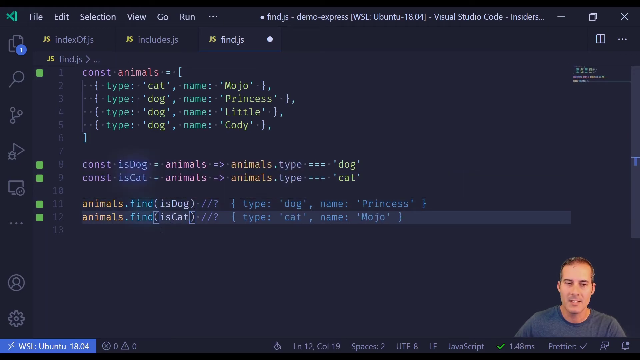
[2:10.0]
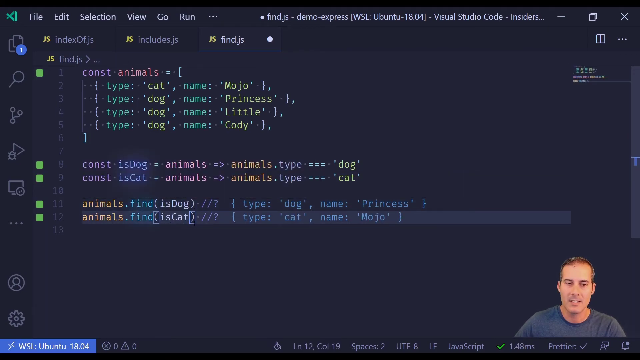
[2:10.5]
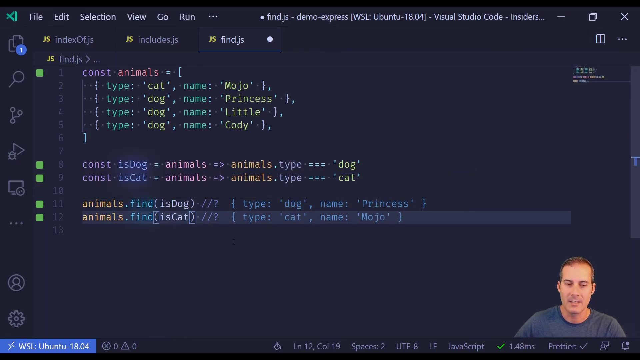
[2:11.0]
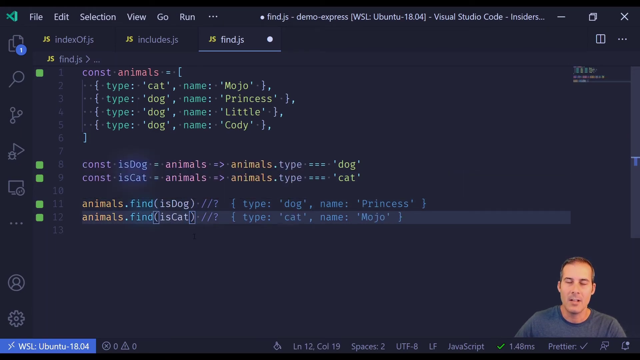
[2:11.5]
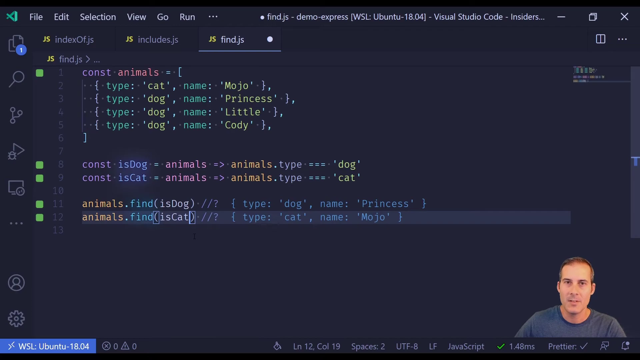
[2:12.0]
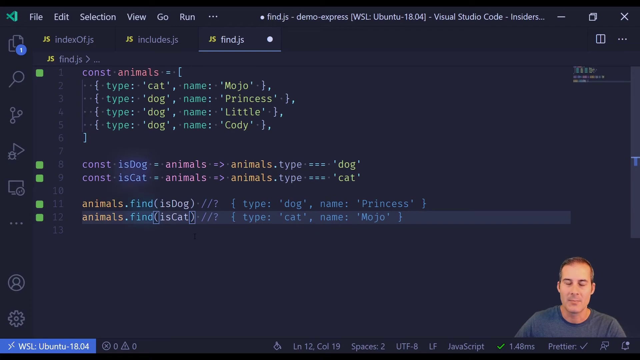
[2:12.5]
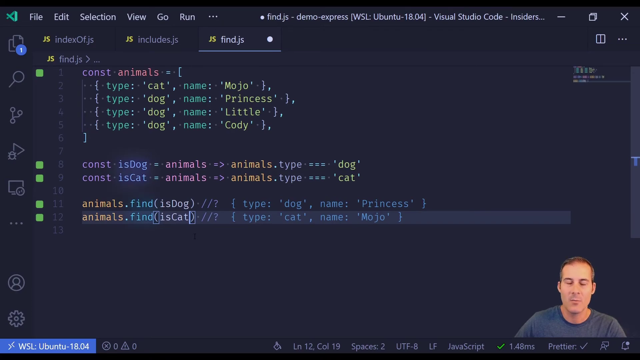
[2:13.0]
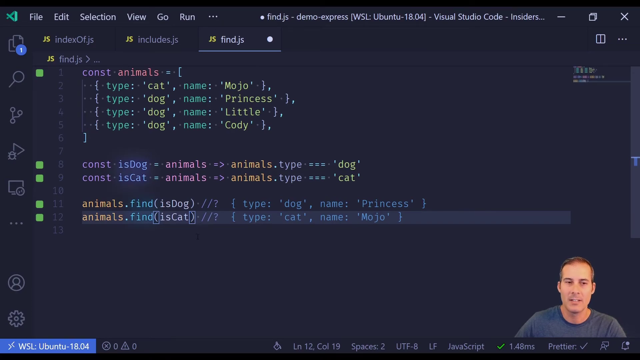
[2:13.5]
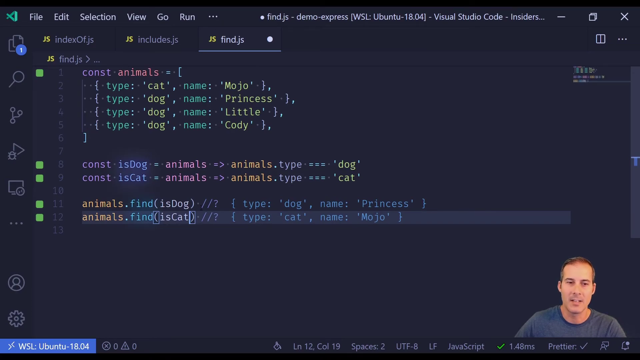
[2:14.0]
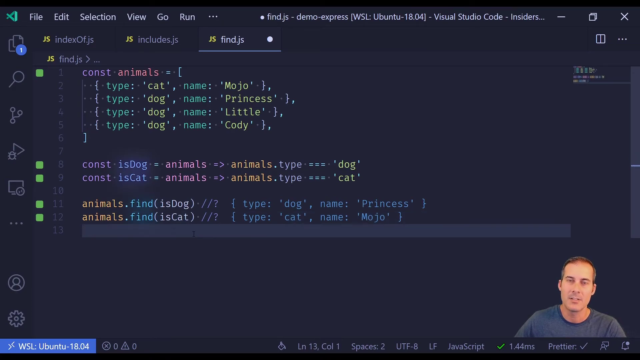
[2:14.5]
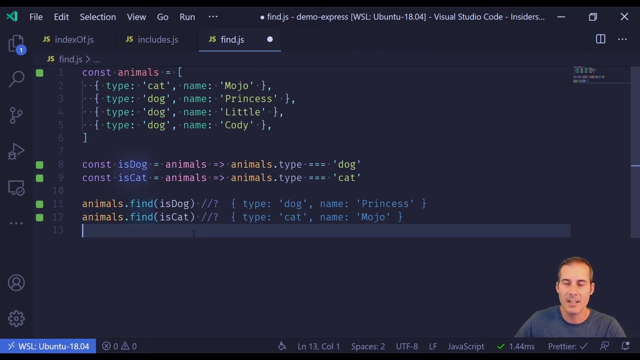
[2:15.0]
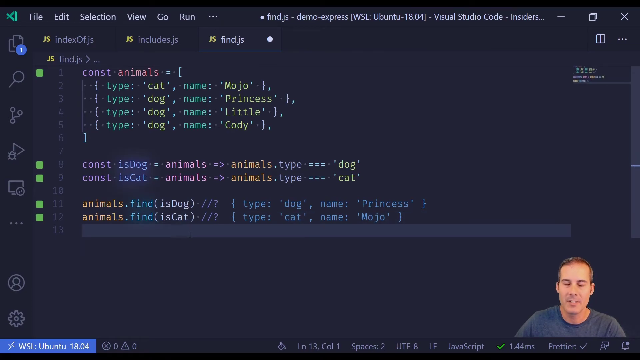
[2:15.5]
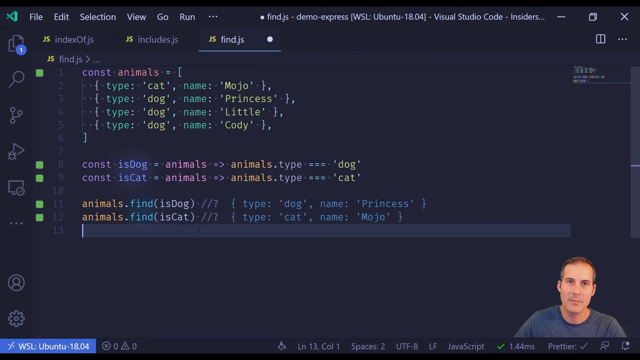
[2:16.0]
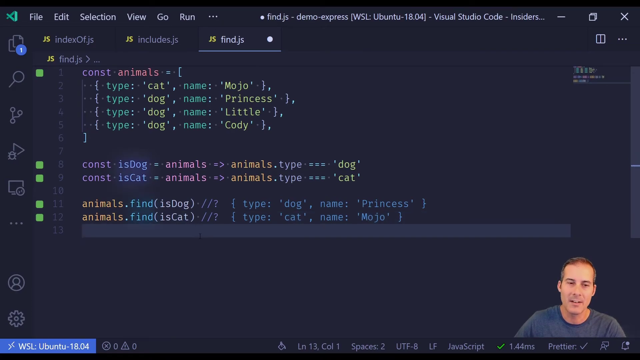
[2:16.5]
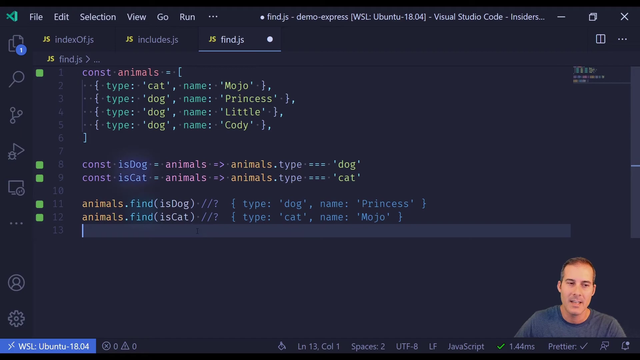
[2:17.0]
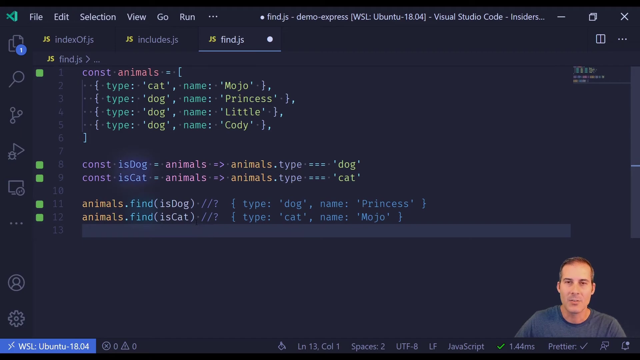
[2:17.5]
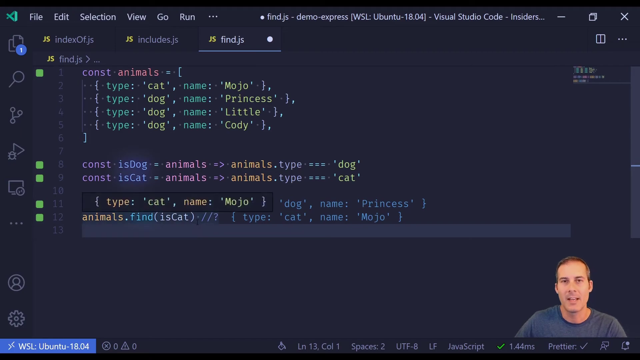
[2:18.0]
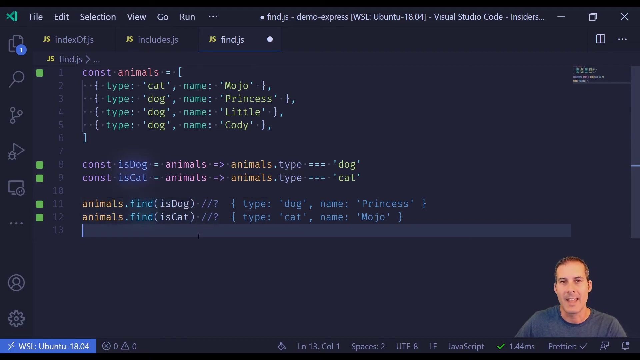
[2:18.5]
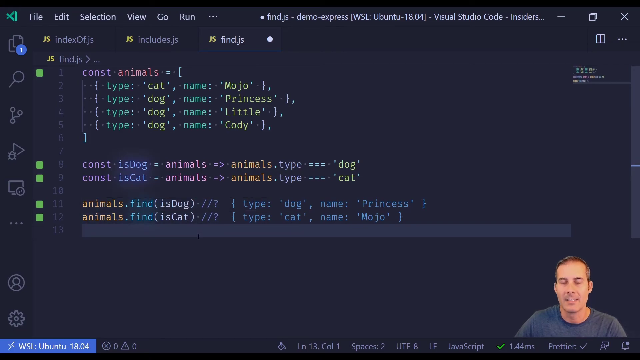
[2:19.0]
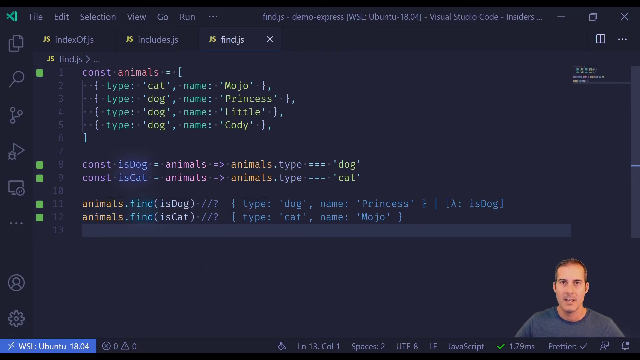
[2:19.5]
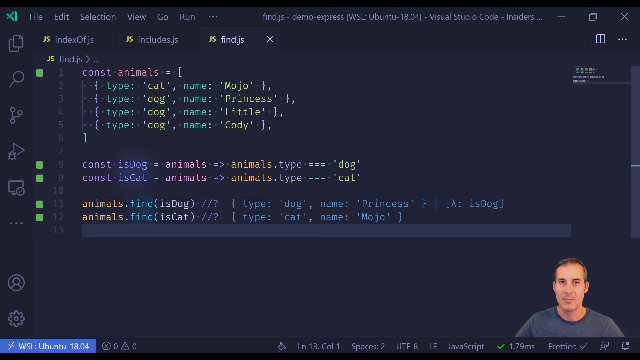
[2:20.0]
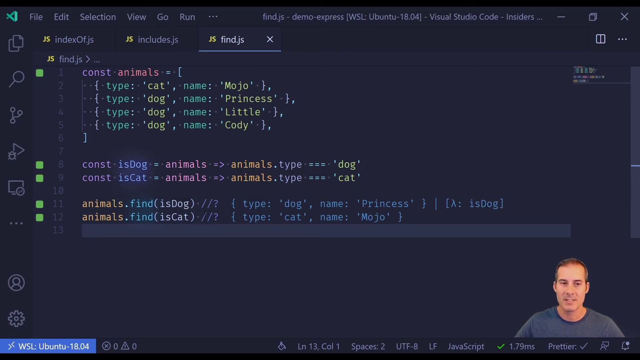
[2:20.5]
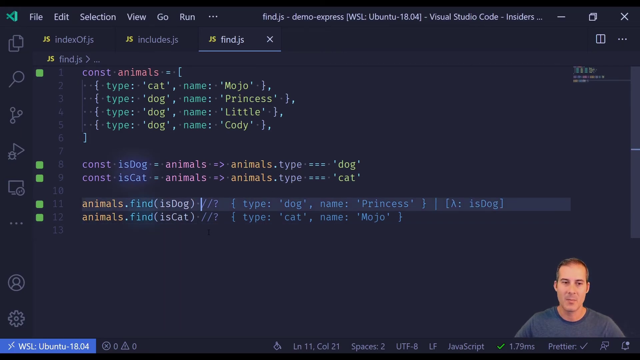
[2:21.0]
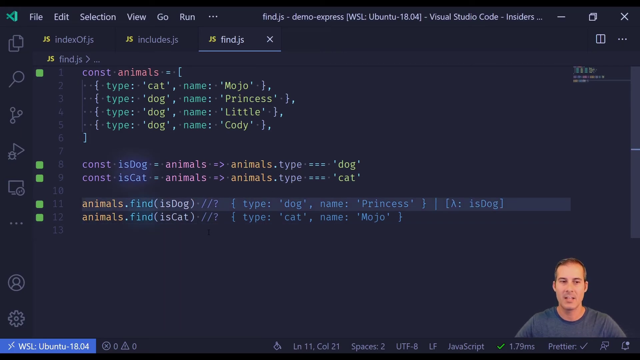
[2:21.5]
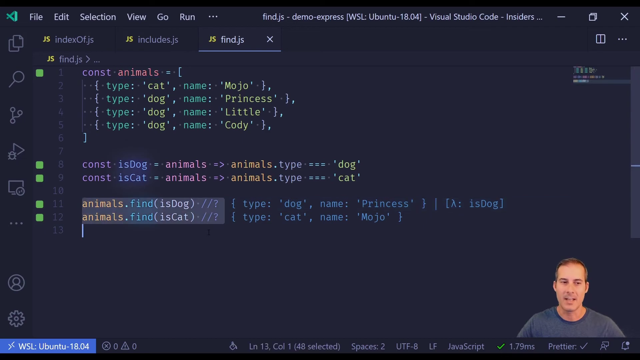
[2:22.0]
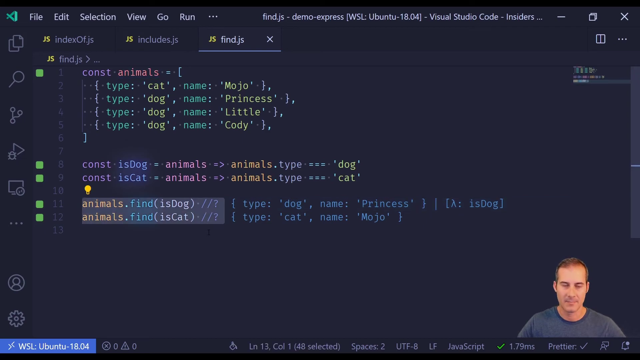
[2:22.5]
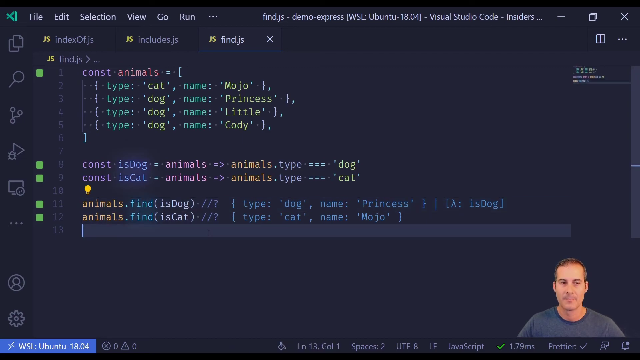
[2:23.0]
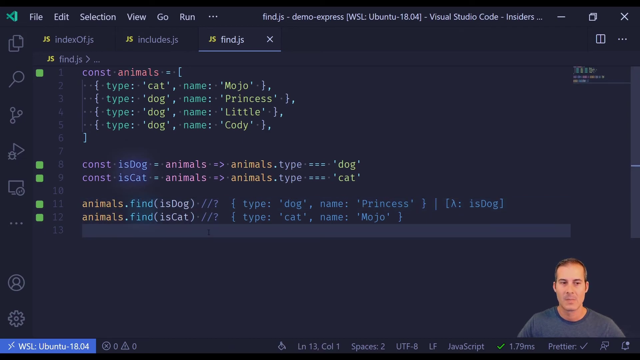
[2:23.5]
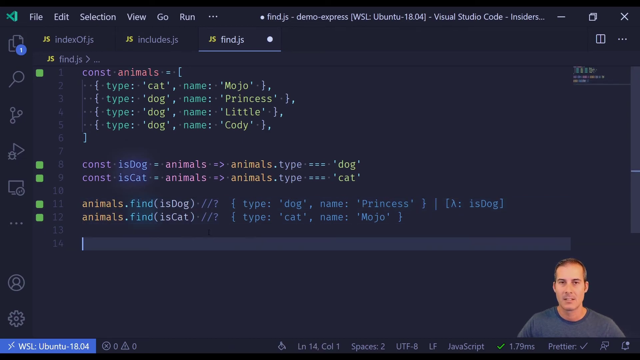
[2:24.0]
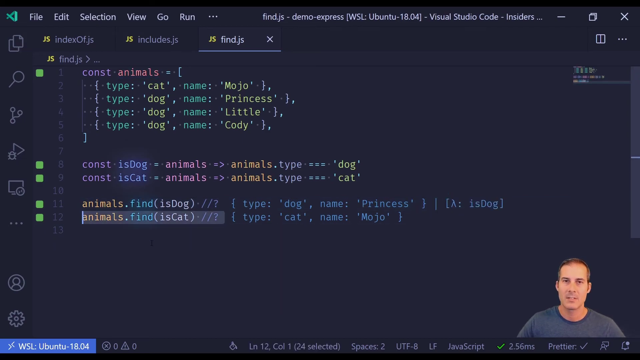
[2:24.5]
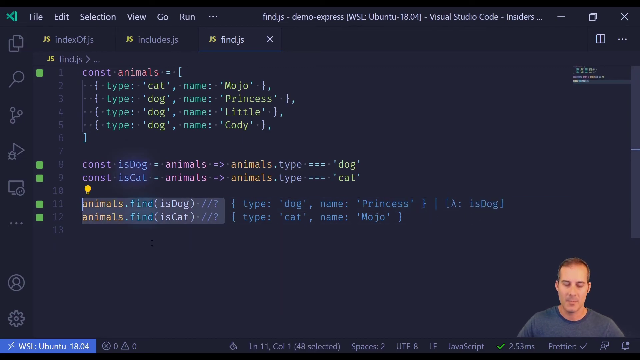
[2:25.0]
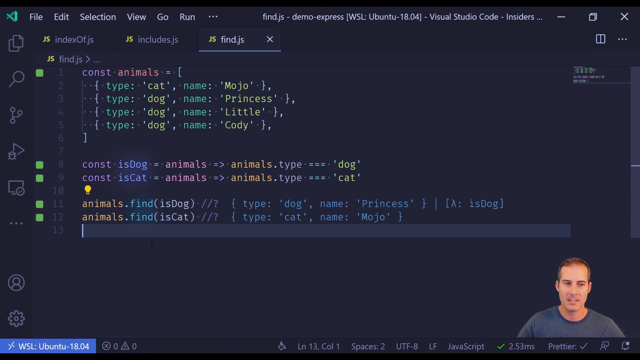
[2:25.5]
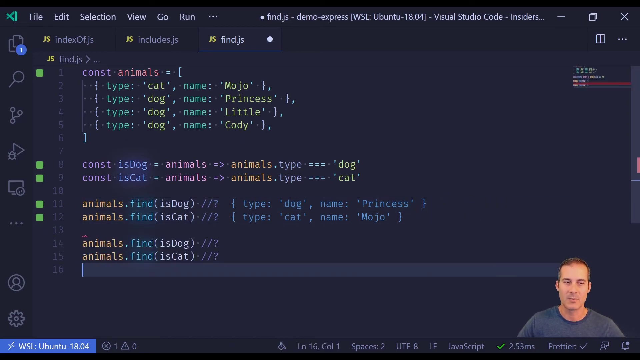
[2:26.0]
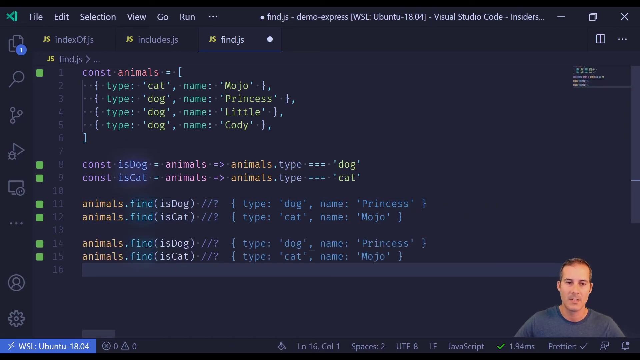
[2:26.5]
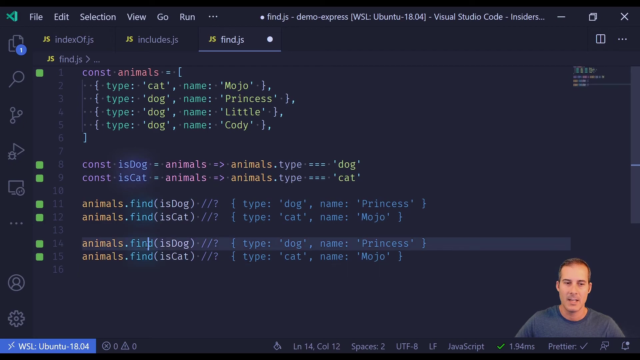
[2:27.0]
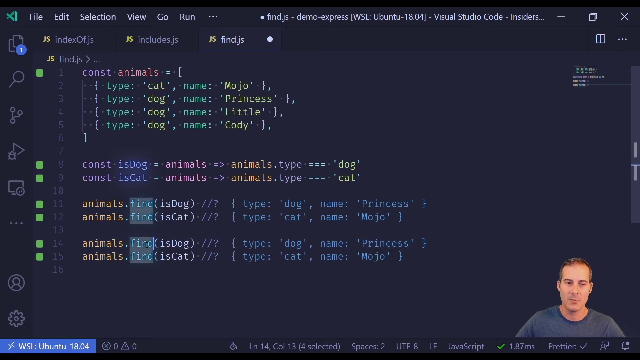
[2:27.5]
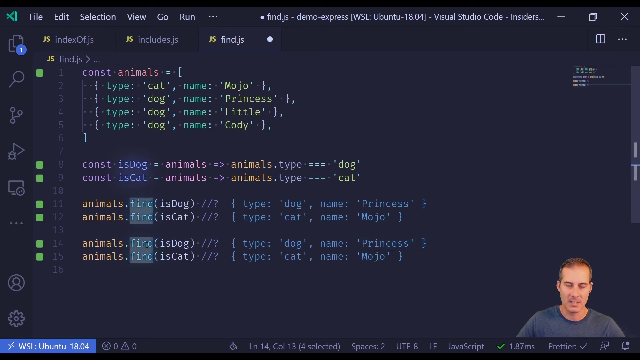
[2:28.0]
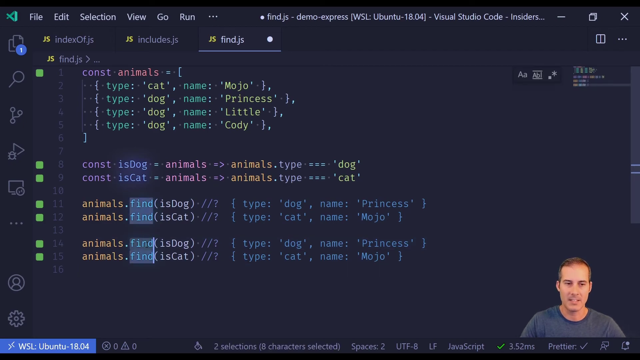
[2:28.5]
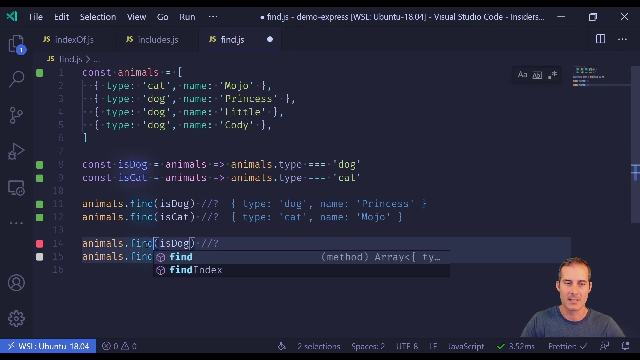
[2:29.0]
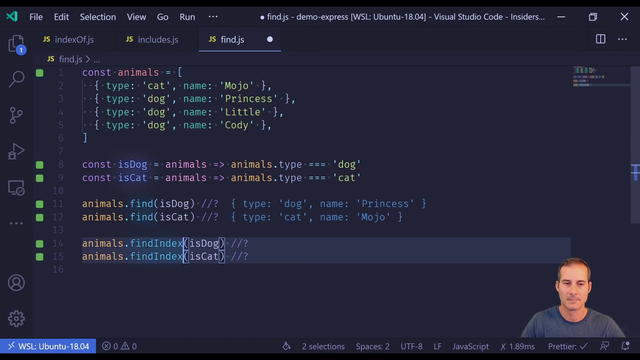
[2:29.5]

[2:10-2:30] Joel is still on screen while the work on the animals code continues, with isdog and iscat and the entries Princess and Mojo. At the top, the active tab is "find.js".